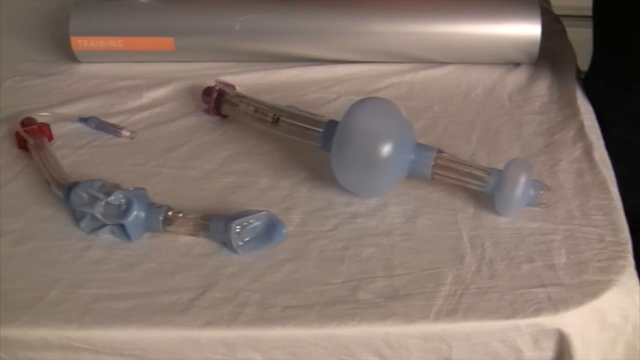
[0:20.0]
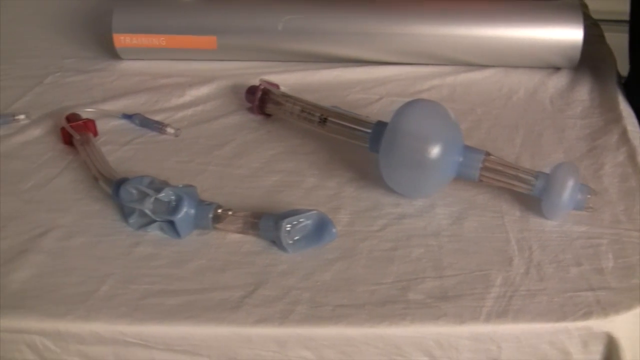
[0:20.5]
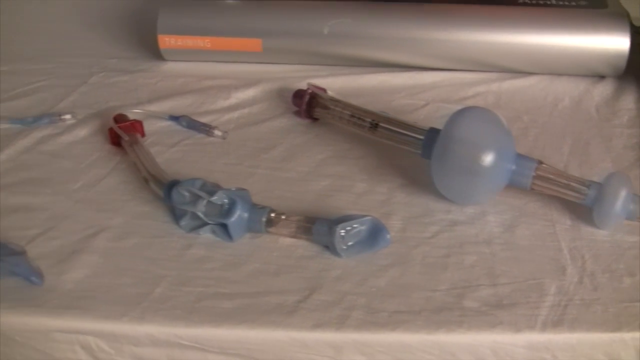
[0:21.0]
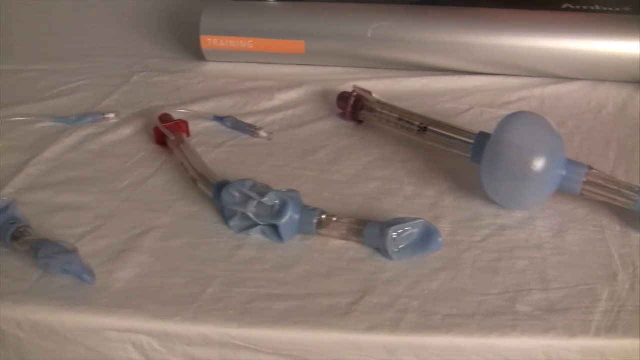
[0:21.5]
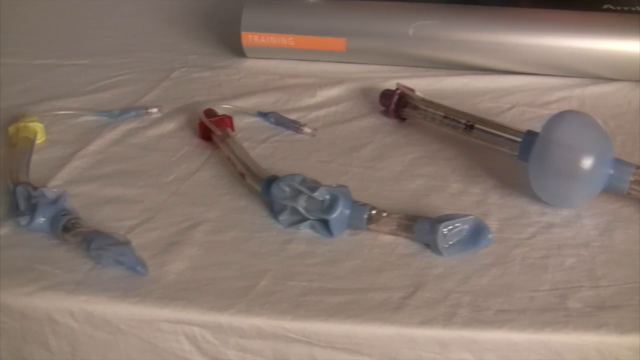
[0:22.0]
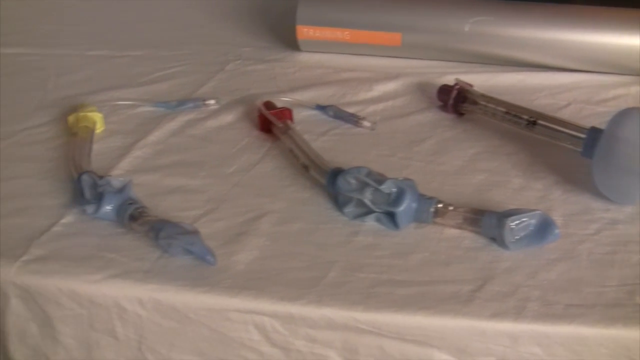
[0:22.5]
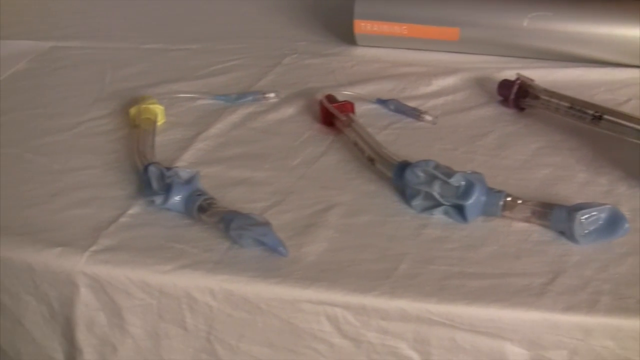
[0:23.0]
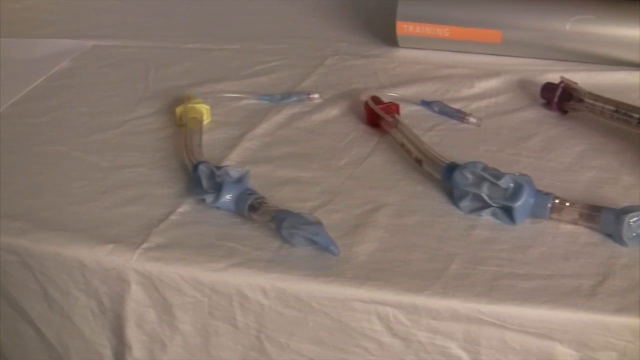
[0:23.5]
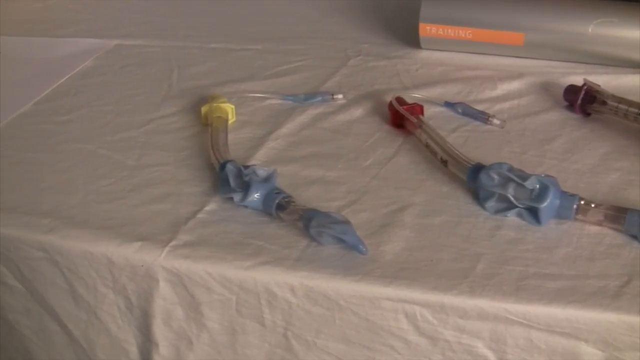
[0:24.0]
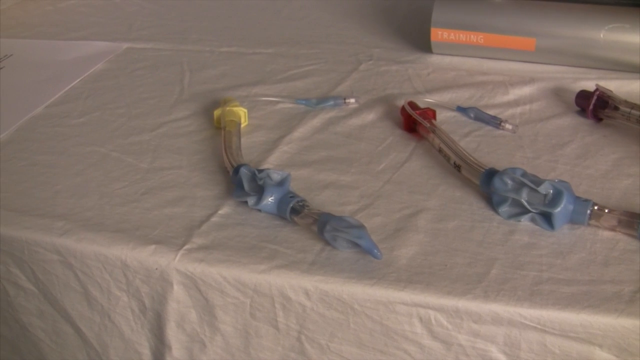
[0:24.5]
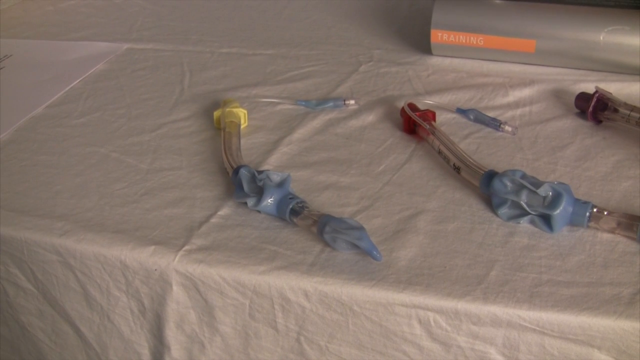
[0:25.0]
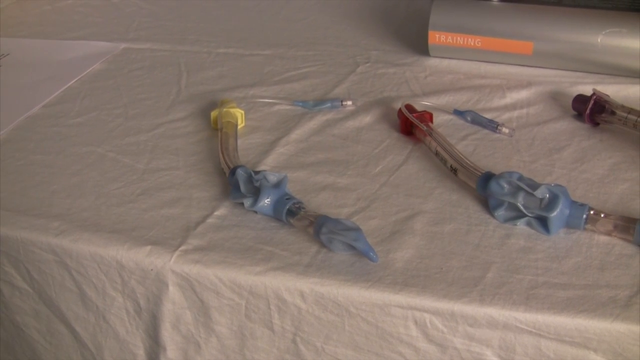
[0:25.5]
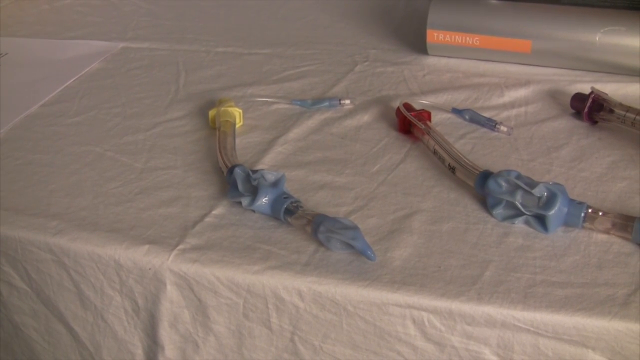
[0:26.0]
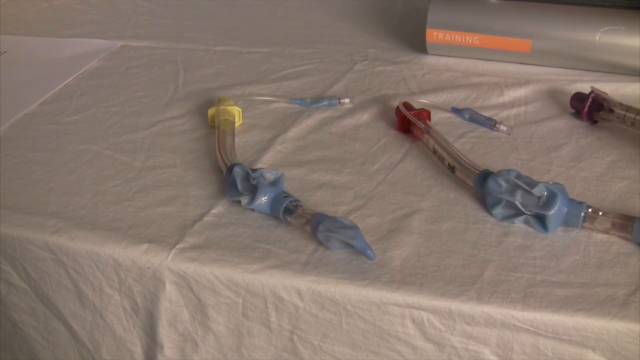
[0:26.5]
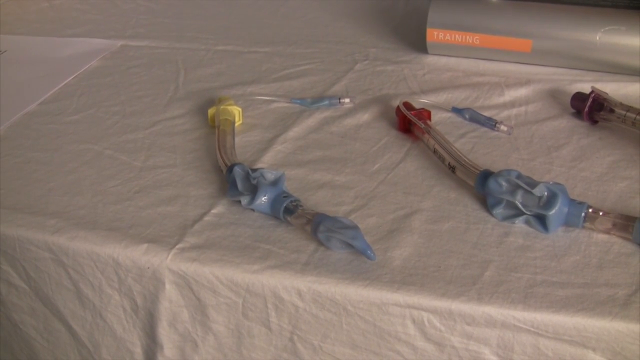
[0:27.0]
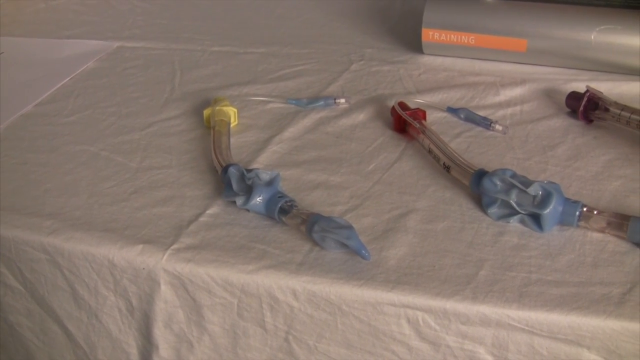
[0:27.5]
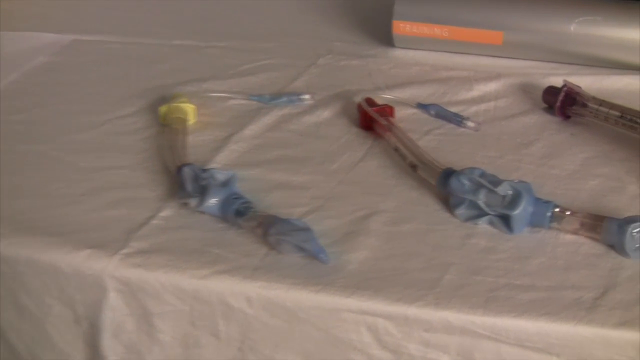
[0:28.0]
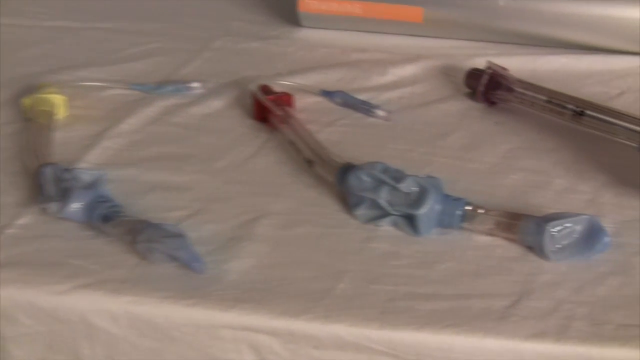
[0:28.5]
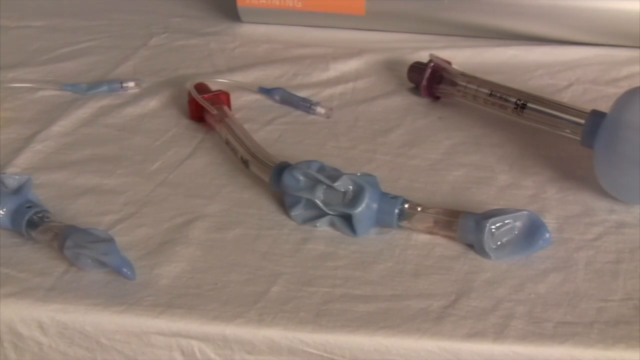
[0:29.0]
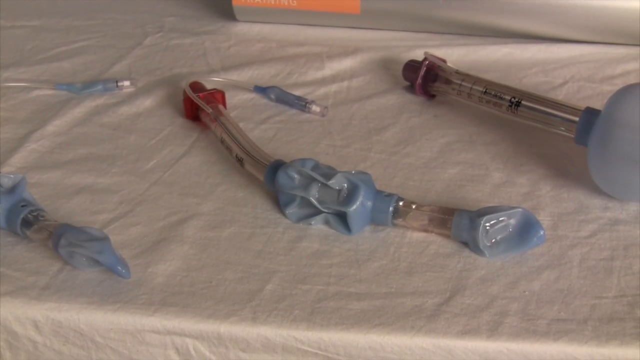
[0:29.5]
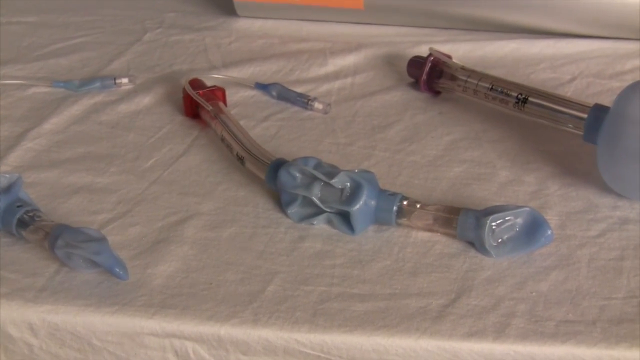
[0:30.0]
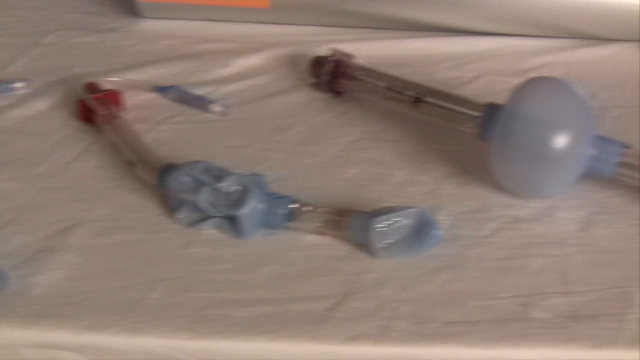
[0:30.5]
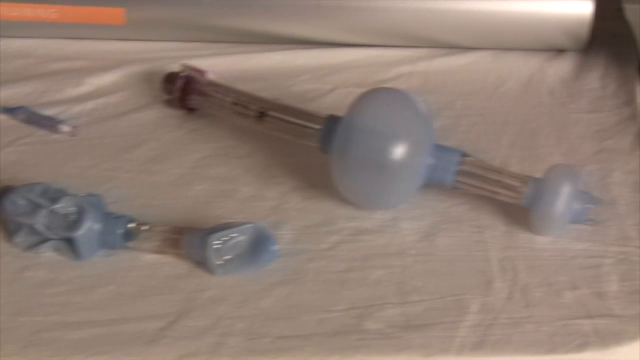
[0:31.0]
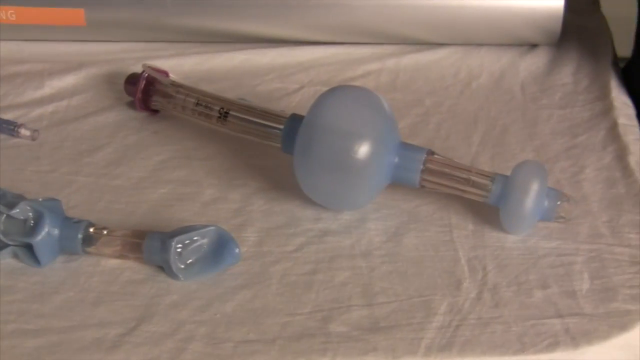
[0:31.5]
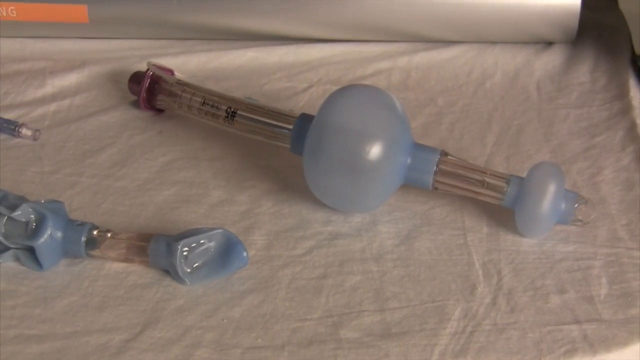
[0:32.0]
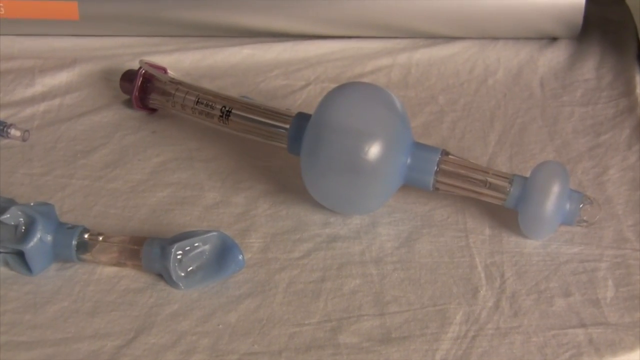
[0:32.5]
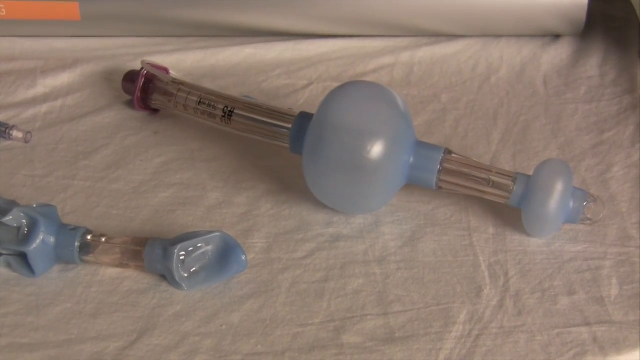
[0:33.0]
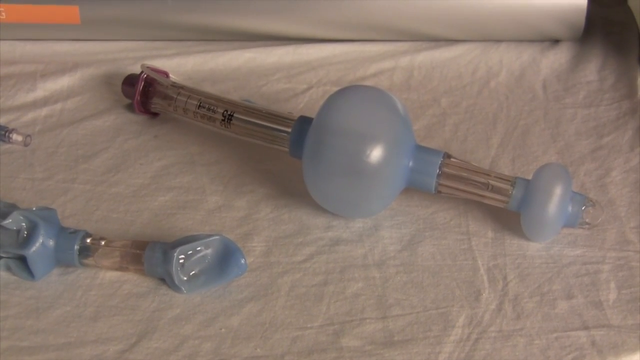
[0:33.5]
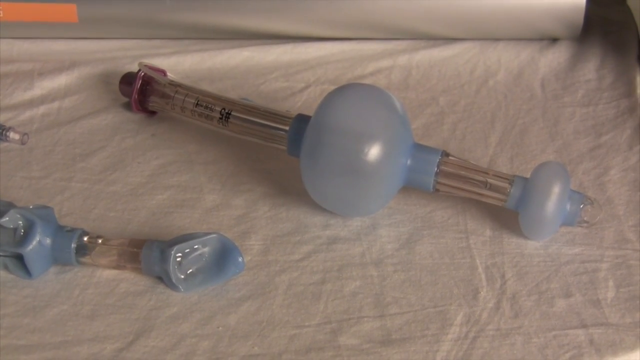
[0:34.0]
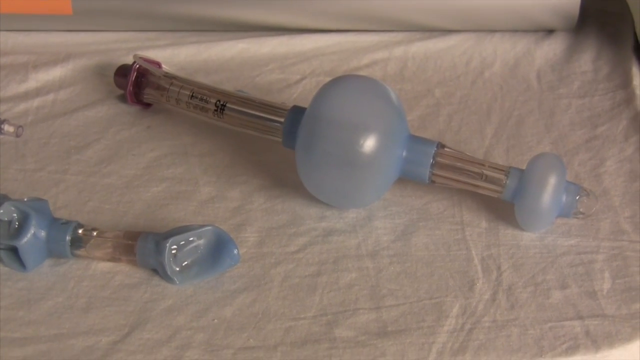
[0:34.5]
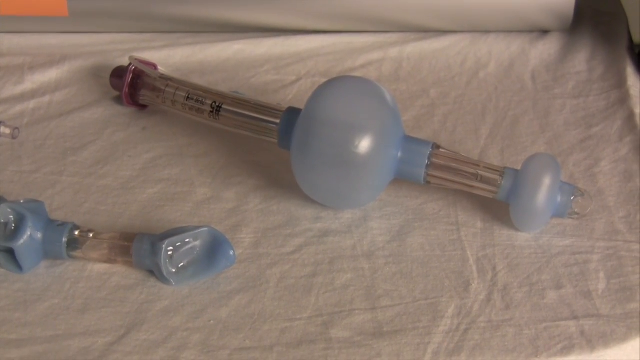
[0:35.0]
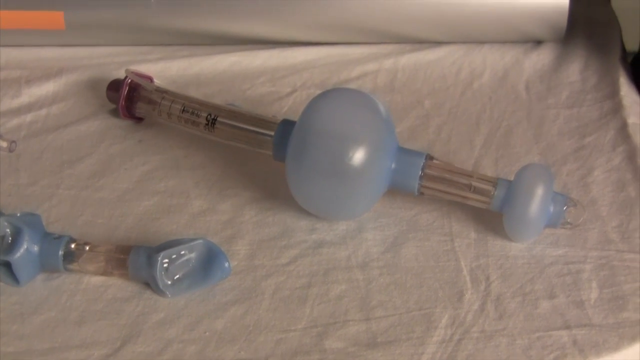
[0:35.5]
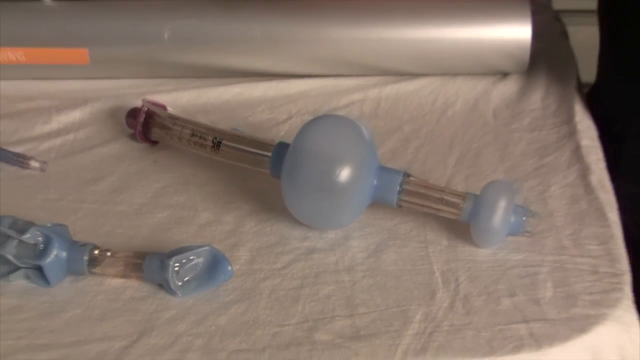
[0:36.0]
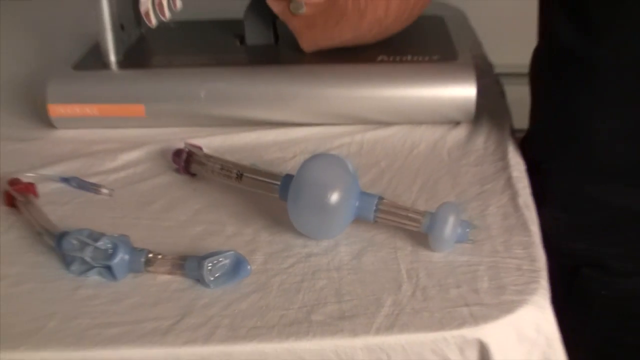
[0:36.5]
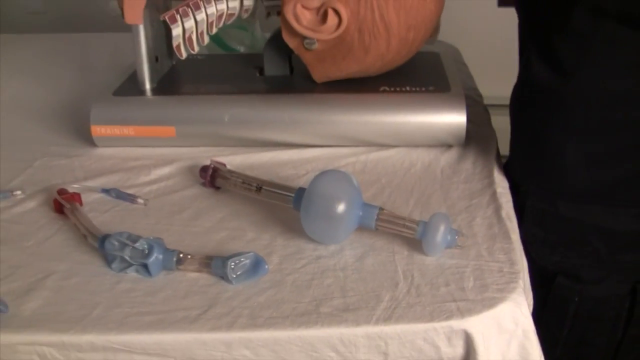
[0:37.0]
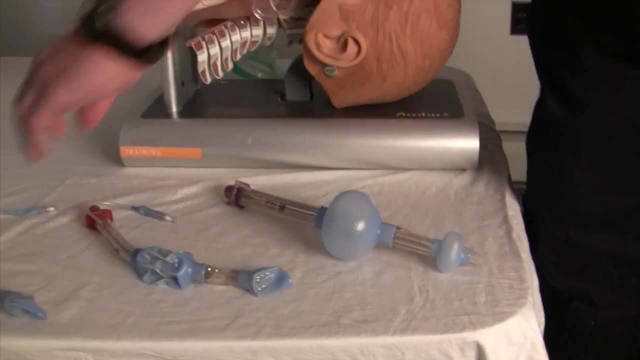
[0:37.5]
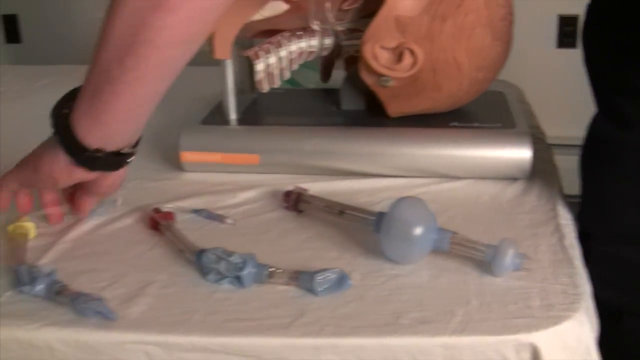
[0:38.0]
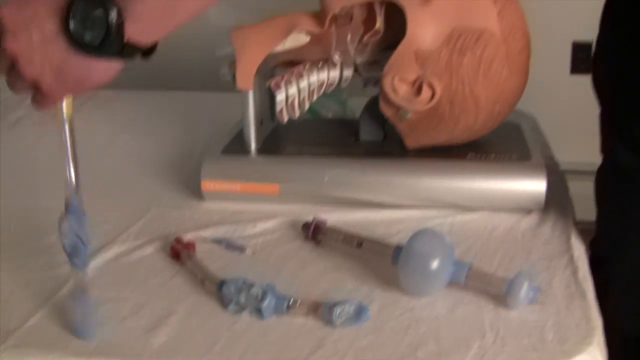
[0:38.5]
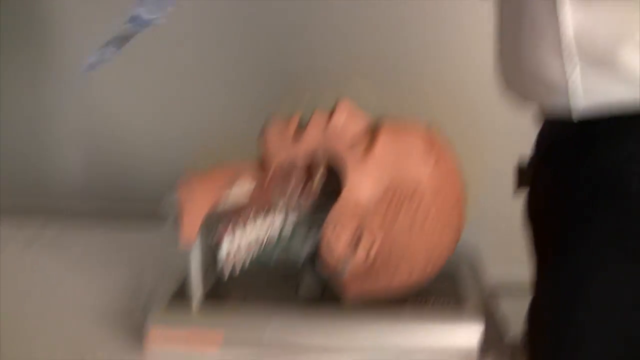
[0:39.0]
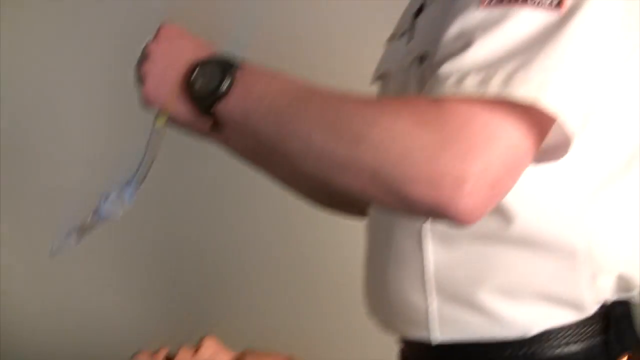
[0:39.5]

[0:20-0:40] Several tools lie on what looks like the edge of a bed. They look like plastic tubes with some sort of light blue pump in the middle and a light blue tip at the end. One of these tools is on the right side; on the left side is another whose middle section looks wrinkled up: it has a red tip on its left side, a plastic tube leading into a wrinkled light blue body, and another tube going out to what looks like a mouthpiece. The video pans to the left, showing three tools: one with a purple tip on the right, one with a red tip in the middle, and one with a yellow tip on the left. The camera stops on the yellow-tipped tool, which appears to have a yellow tip, a plastic tube leading to a wrinkled, scrunched-up light blue body, and another plastic tube ending in a light blue tip. The video then zooms in on the middle tool with the red tip, then goes over again to the right to the purple-tipped tool, whose middle body is bulbous and looks outstretched instead of wrinkled like the other tools. The video zooms out, showing a mannequin head at the top right. A left hand reaches down, picks up the yellow-tipped tool on the far left, and holds it up in front of the body on the right side, which appears to be wearing a white shirt.